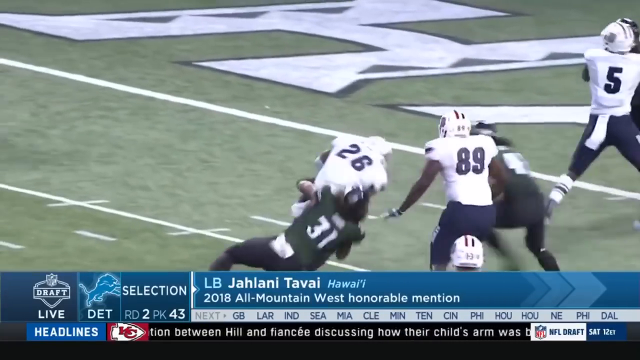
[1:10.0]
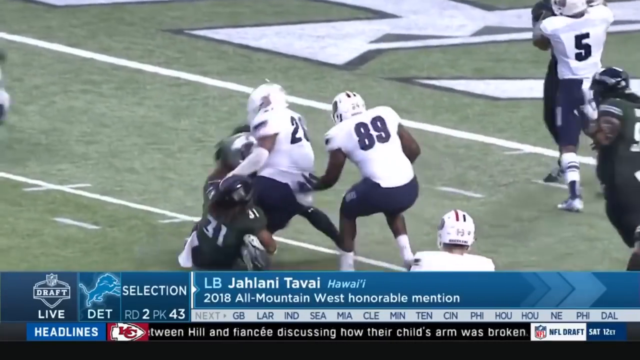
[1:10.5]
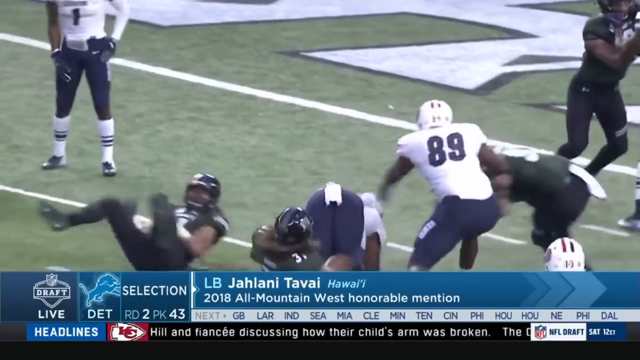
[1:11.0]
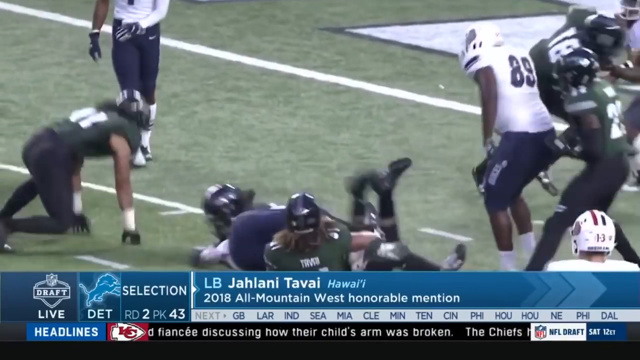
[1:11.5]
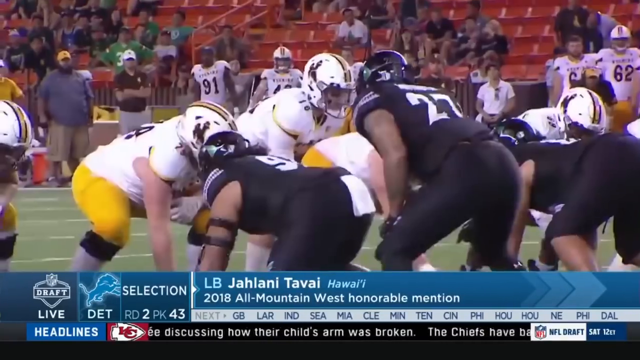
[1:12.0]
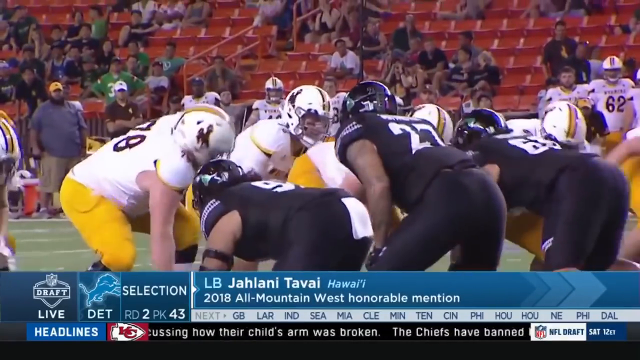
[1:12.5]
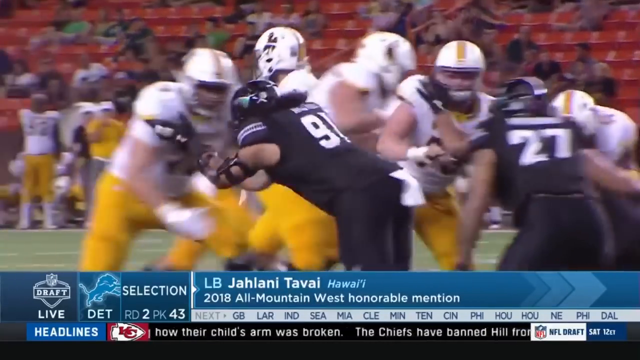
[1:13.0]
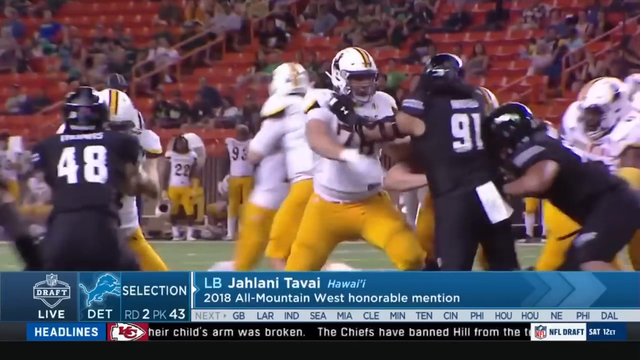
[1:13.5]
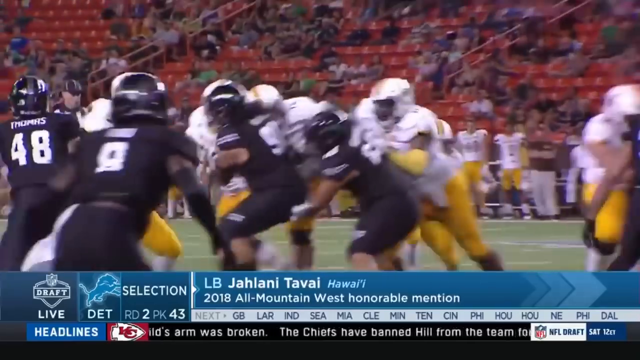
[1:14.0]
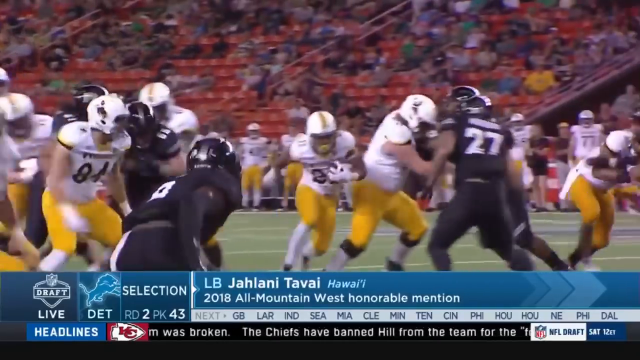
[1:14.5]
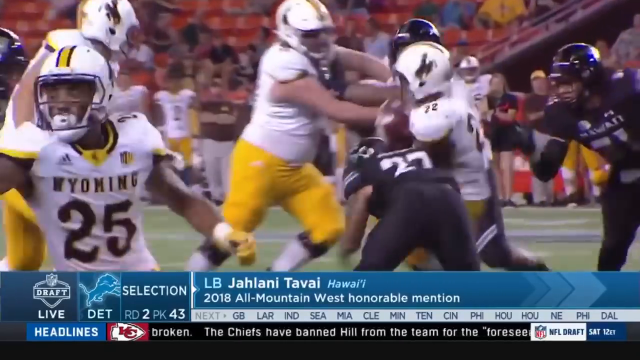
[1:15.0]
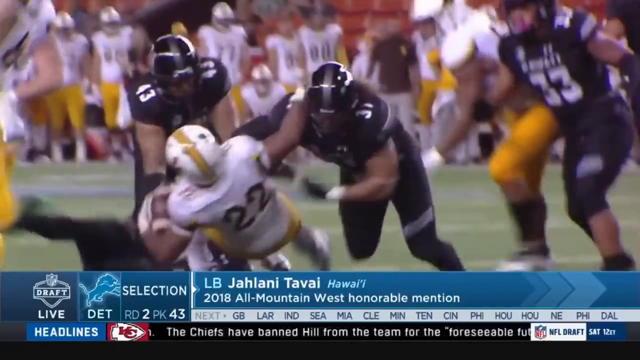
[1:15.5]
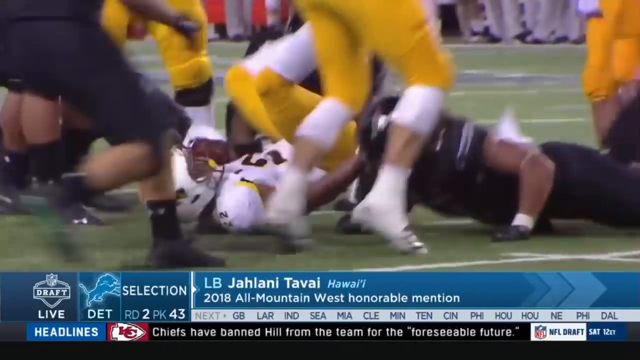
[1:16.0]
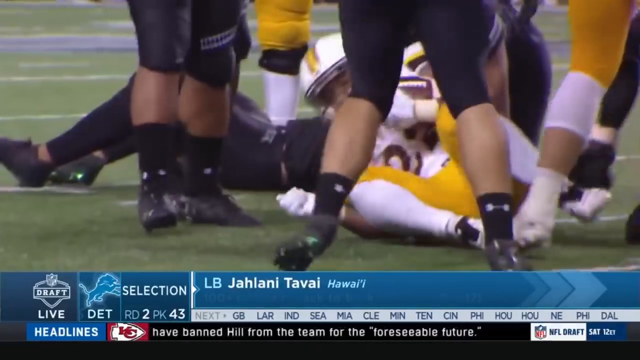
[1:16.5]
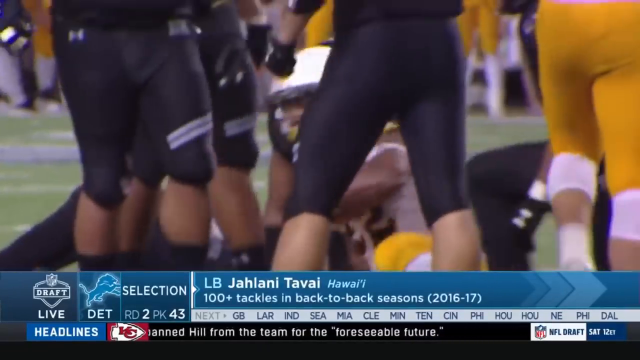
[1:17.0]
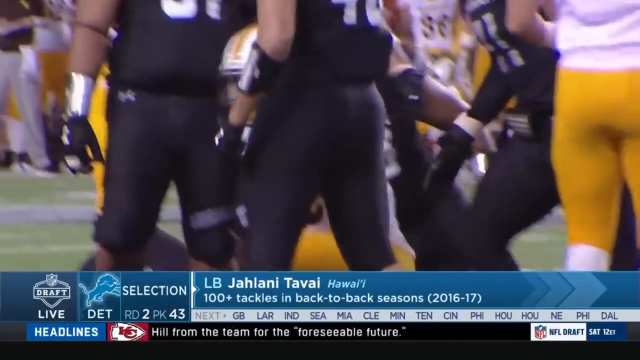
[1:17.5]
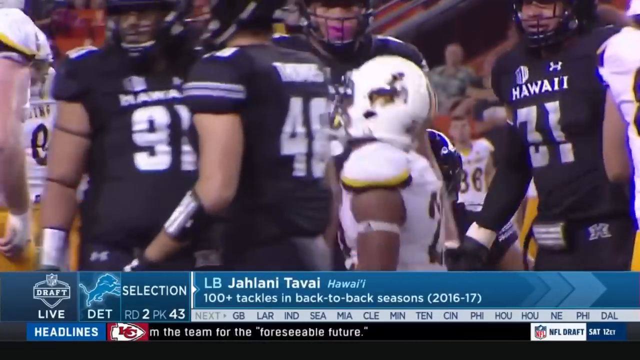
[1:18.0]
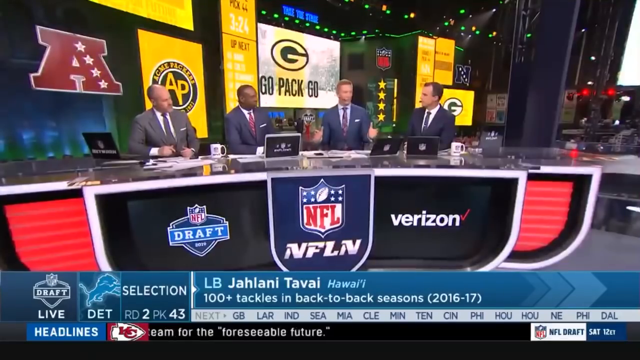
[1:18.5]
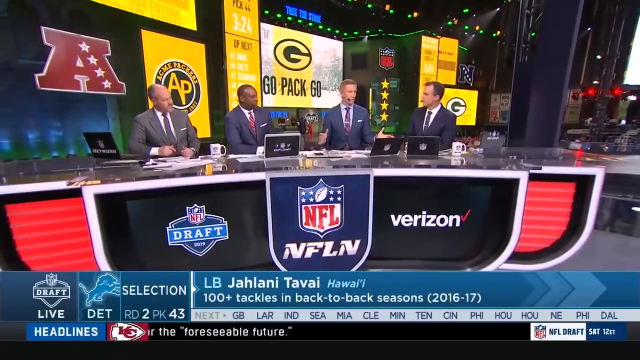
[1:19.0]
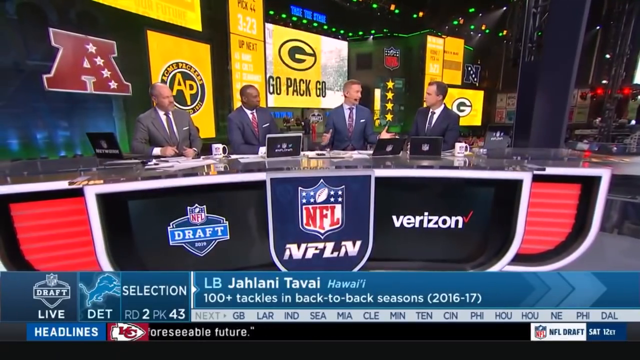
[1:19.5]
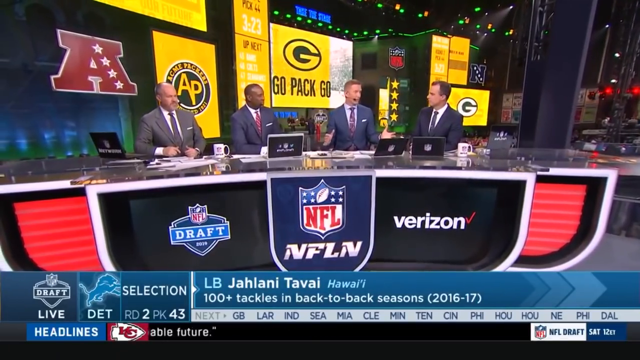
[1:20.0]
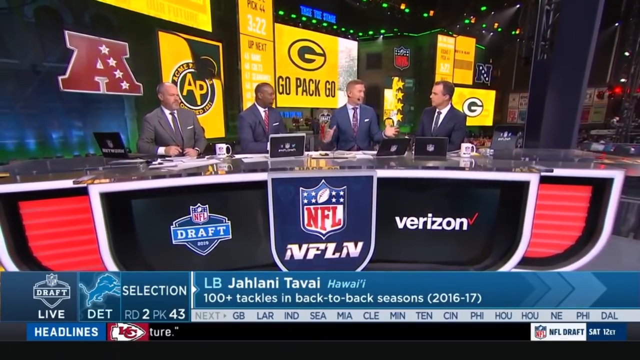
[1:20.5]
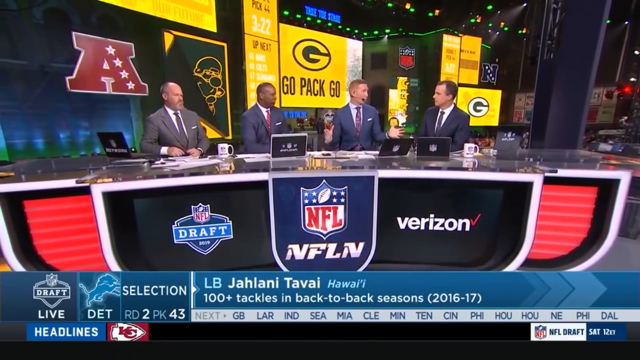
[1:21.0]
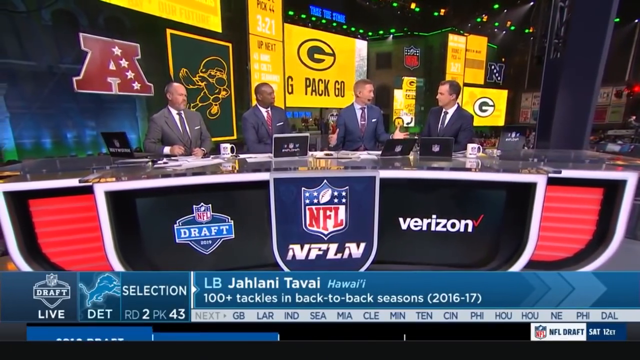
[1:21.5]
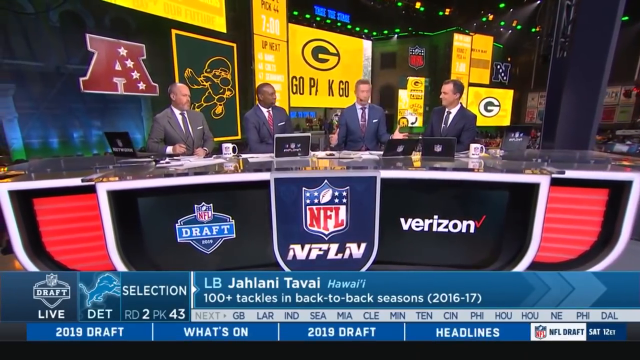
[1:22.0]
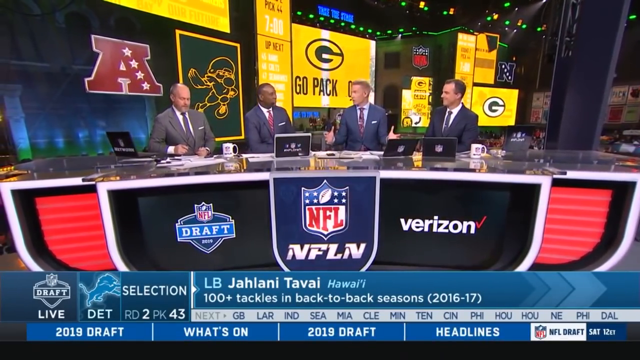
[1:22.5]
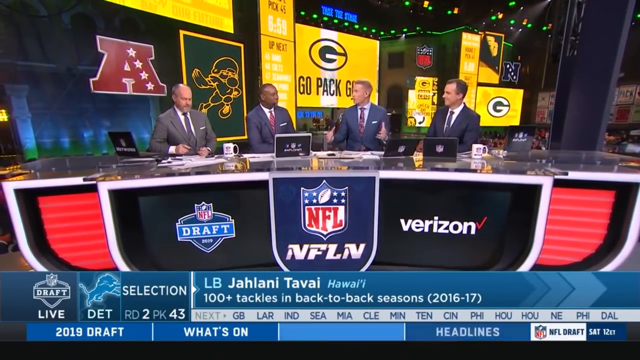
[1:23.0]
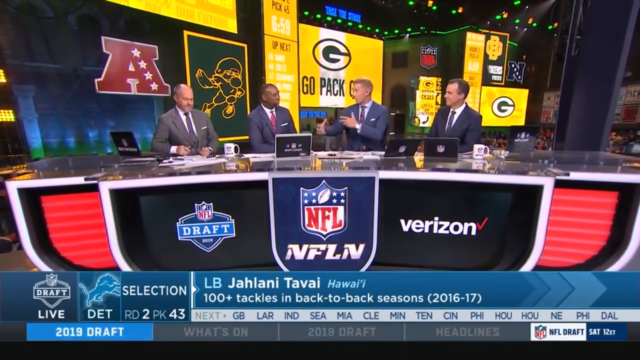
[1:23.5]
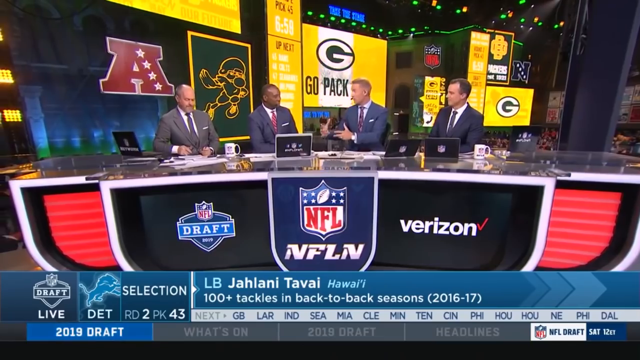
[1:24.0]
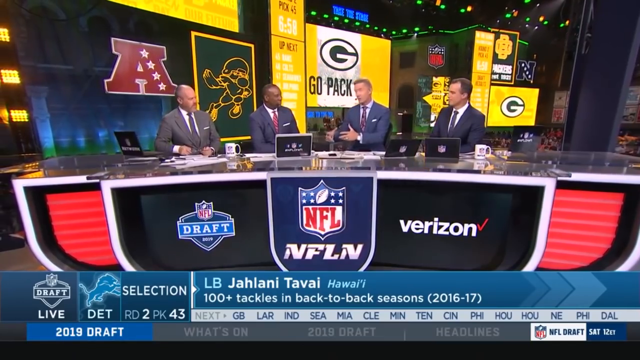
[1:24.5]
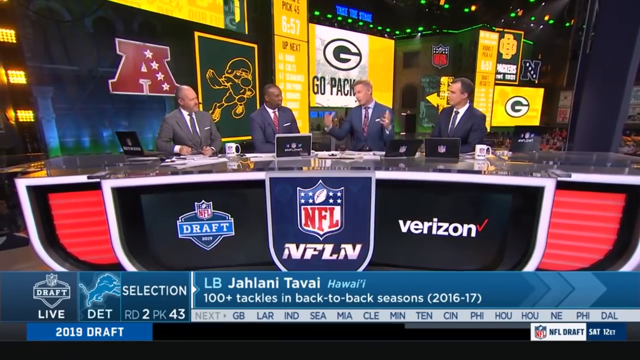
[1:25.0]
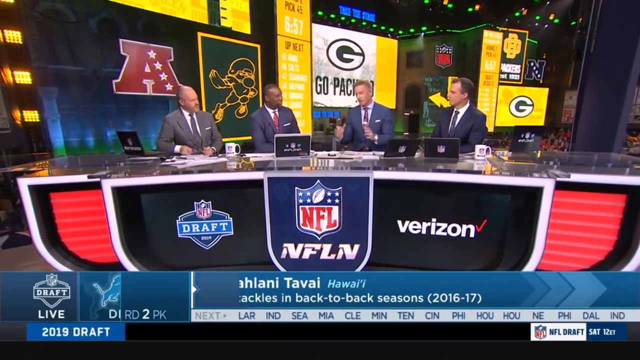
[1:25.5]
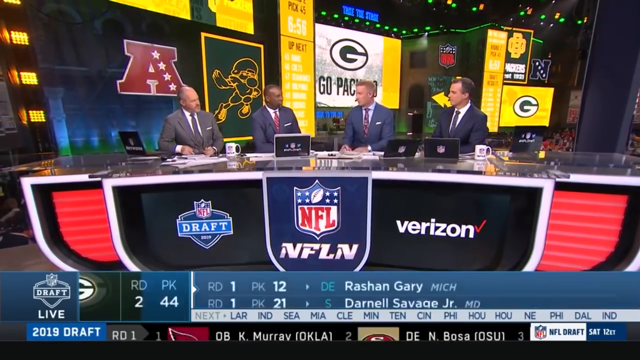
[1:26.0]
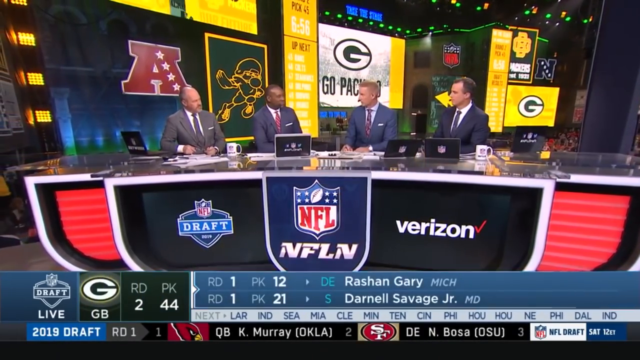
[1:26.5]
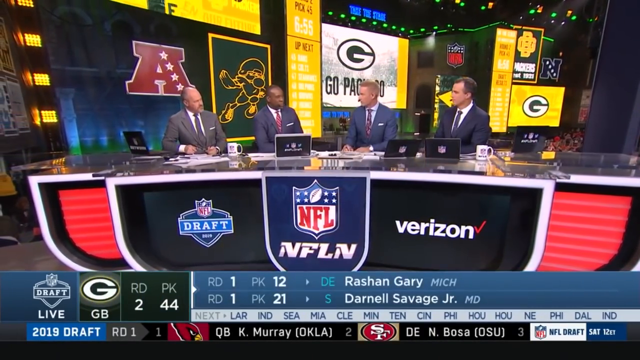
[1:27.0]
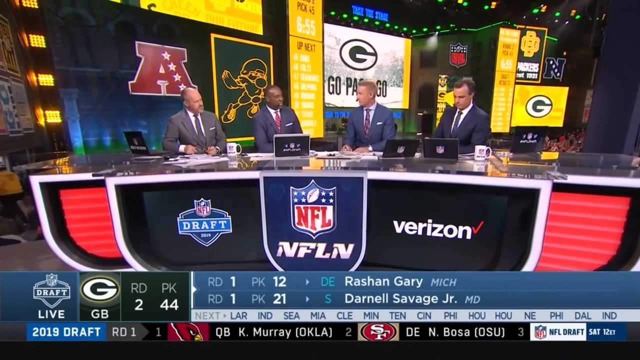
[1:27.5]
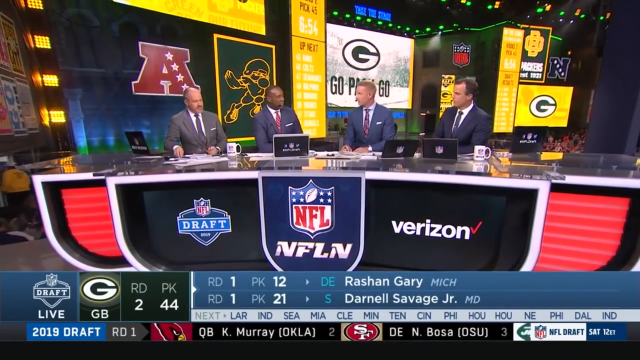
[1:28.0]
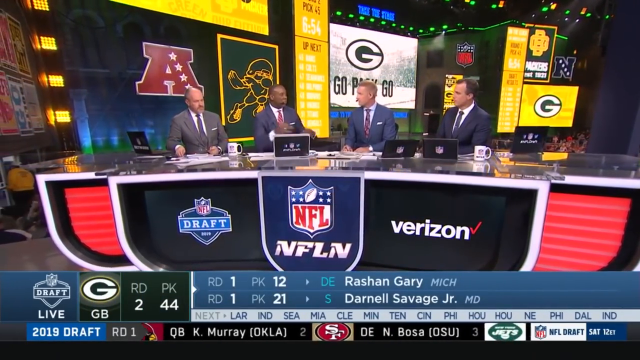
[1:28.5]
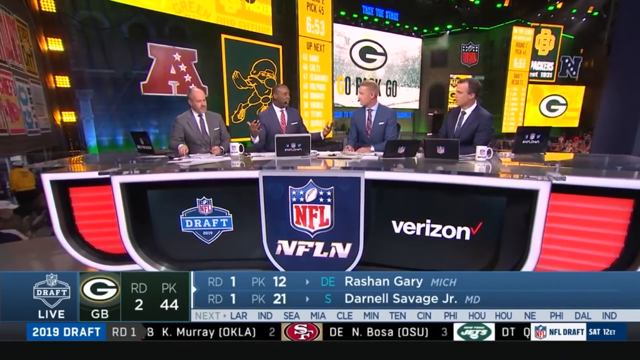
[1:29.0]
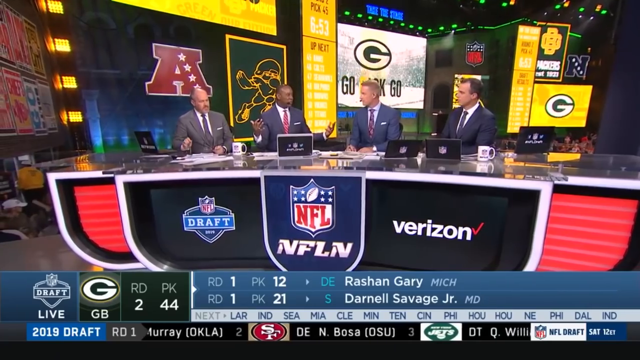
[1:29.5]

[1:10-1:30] The ball carrier has a black 26 on his back and the attacking player has a white 31 on his back; another player comes in and tackles him. It cuts to another line of scrimmage, with black players on the right-hand side and players in white and yellow on the left, predominantly white with yellow trousers. The quarterback, wearing number 22, appears to try to run through the middle. He is tackled, tries to roll the tackle, but someone comes in from the right-hand side and hits him, and the other players start walking around him. It cuts back to the desk with the four men, where the man two in from the left is talking, with one man on his right and two on his left, making gestures with his hand. The background has changed to yellow with "go, pack, go". At the bottom, "100 plus tackles in back-to-back seasons 2016-17" appears underneath "Jelani Tavai Hawaii", with the lion selection and draft text still on the left-hand side. The bottom then changes to the Green Bay Packers, with text including "Roshan Gary" and "Darnell Savage Jr." and various numbers next to them, presumably stats.